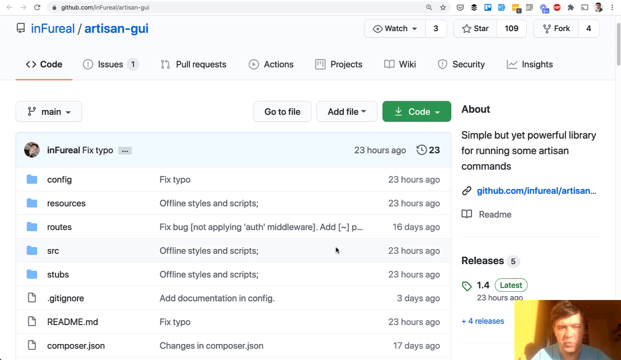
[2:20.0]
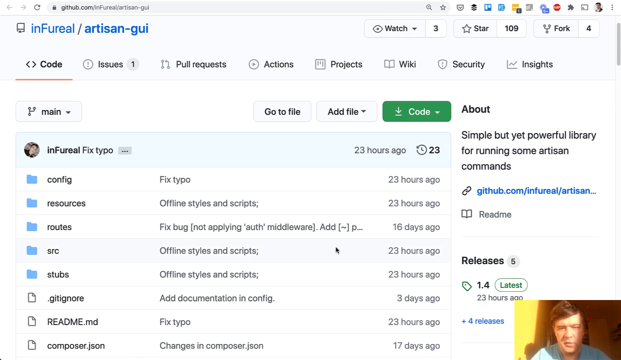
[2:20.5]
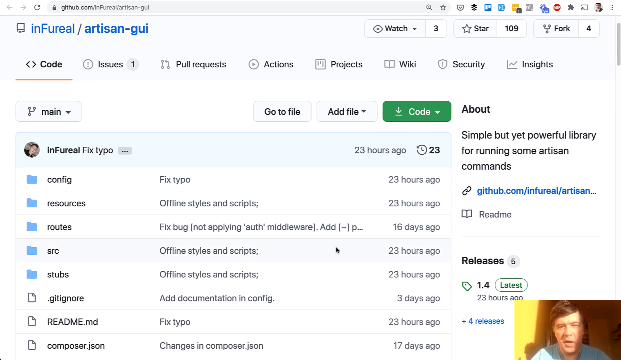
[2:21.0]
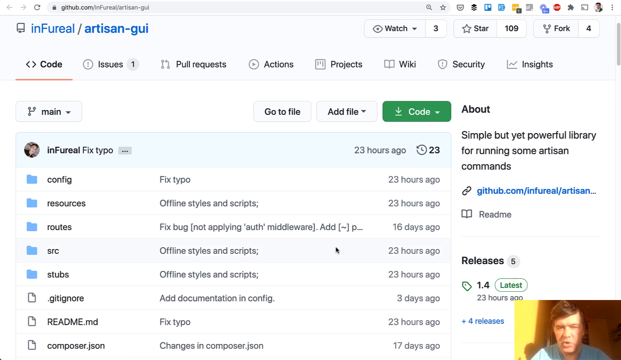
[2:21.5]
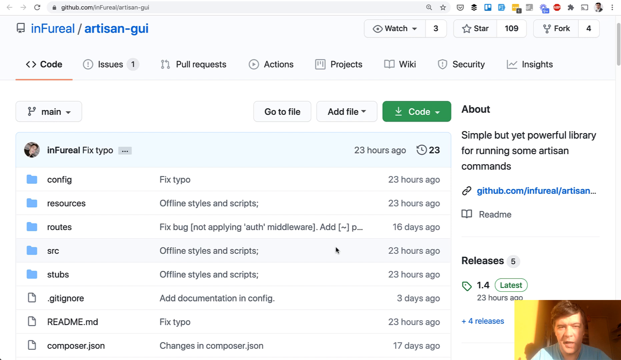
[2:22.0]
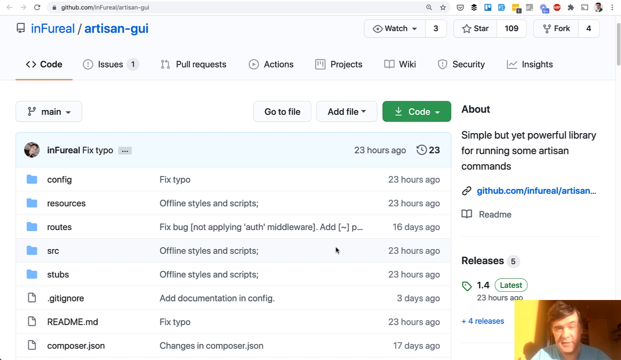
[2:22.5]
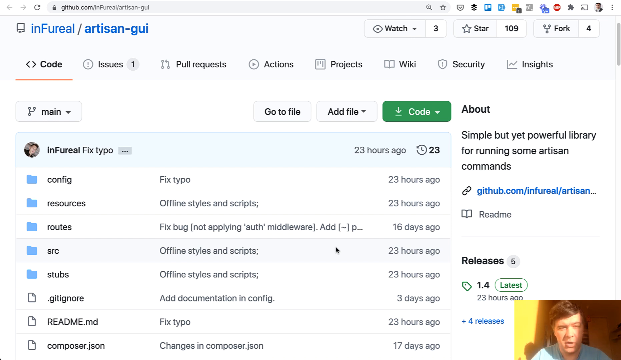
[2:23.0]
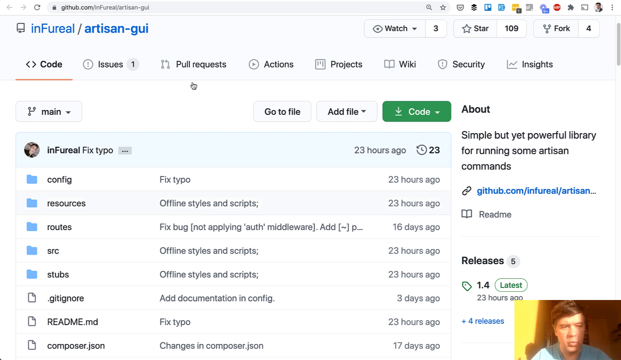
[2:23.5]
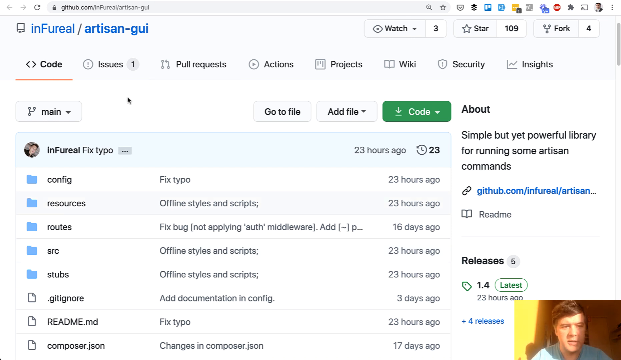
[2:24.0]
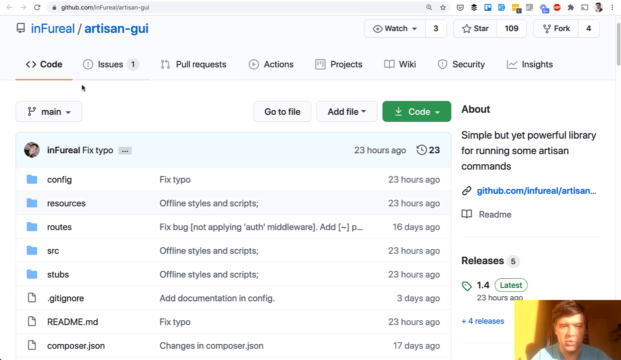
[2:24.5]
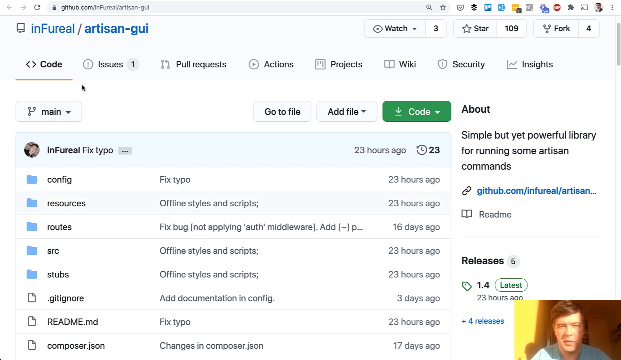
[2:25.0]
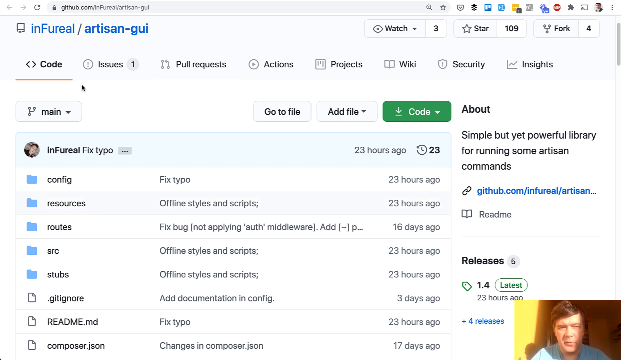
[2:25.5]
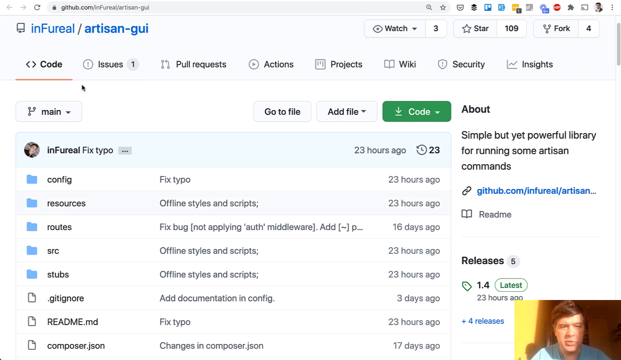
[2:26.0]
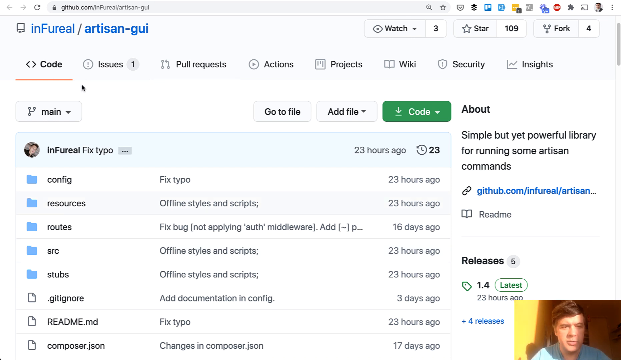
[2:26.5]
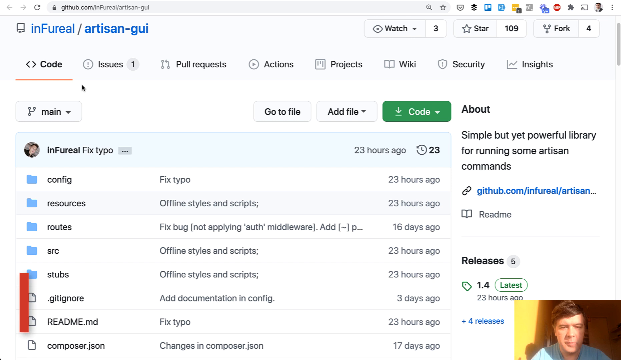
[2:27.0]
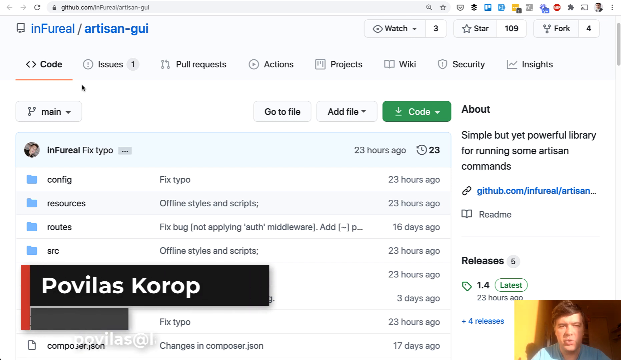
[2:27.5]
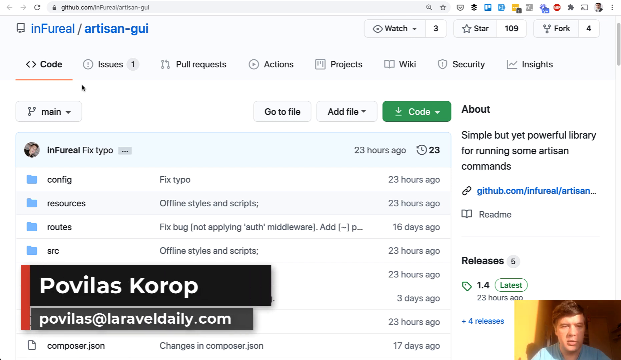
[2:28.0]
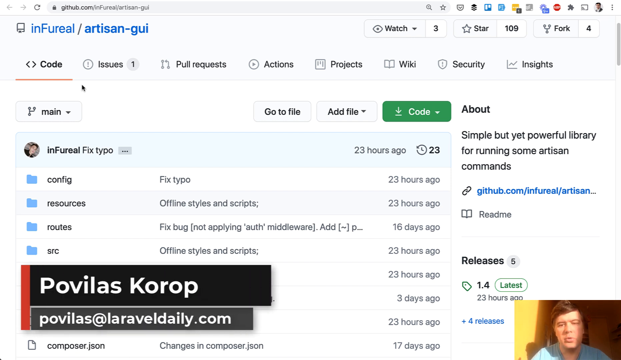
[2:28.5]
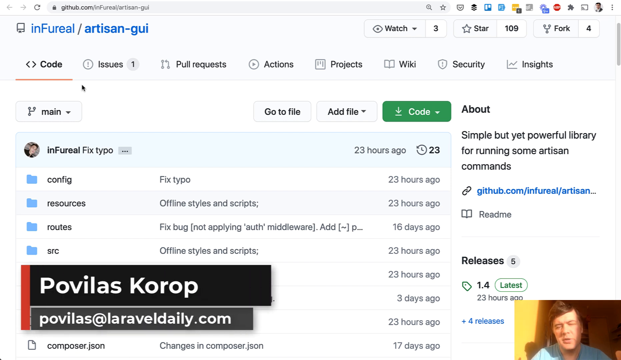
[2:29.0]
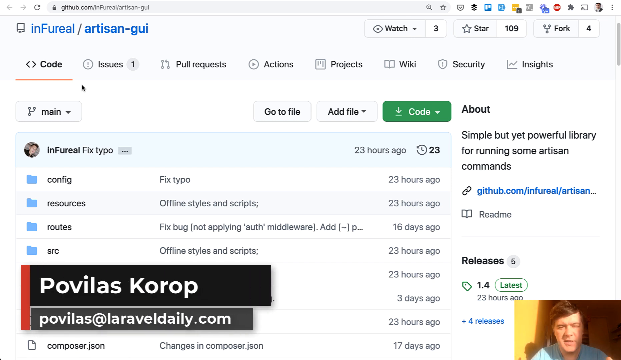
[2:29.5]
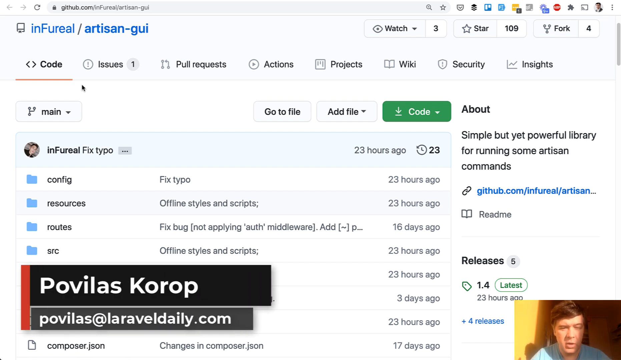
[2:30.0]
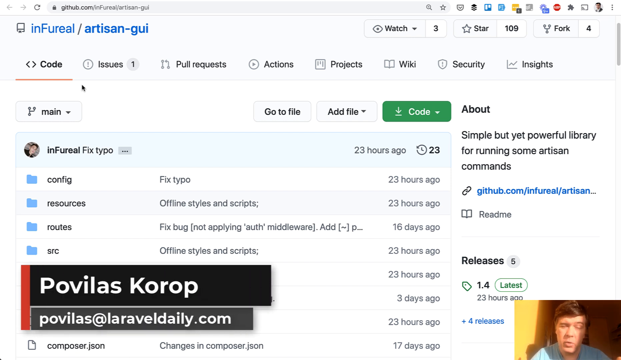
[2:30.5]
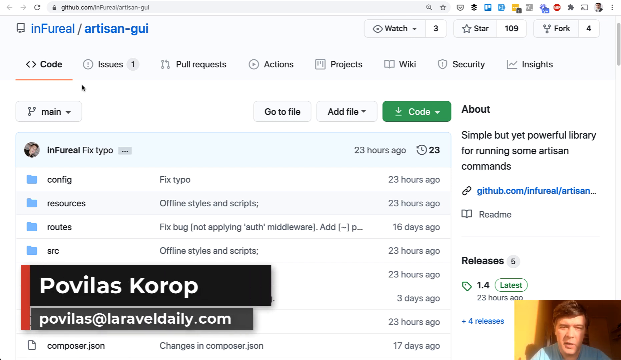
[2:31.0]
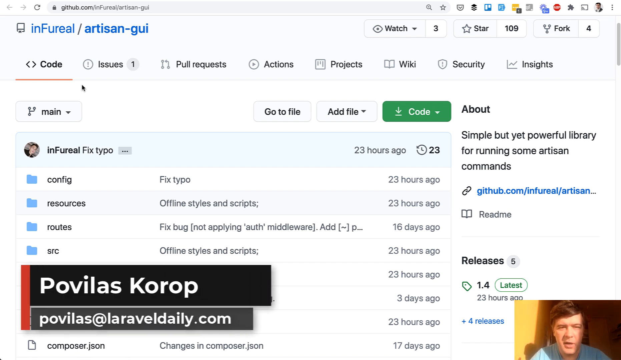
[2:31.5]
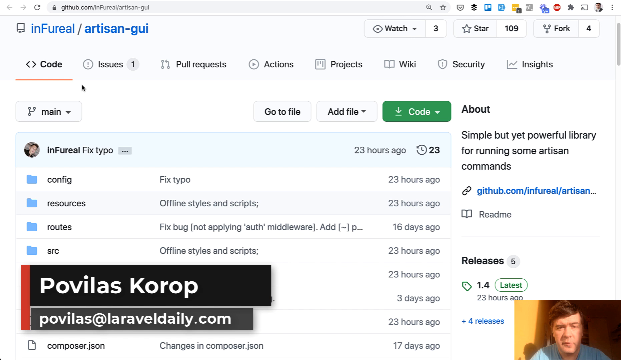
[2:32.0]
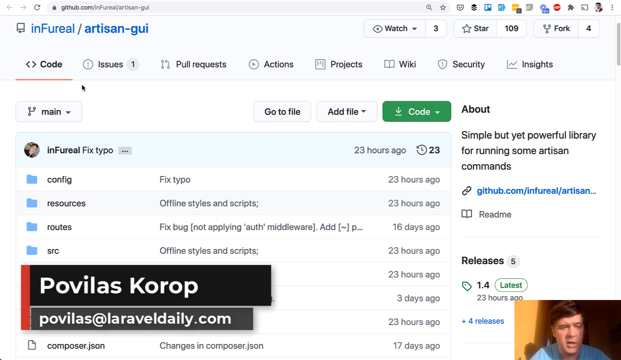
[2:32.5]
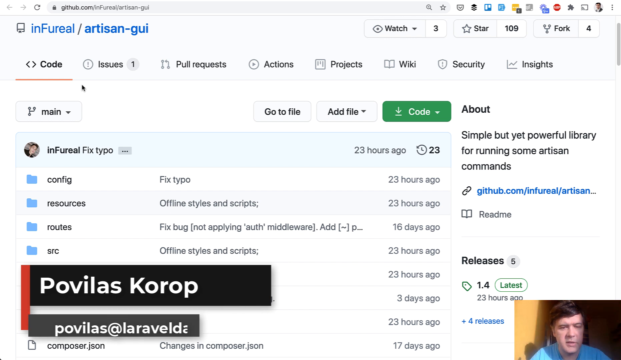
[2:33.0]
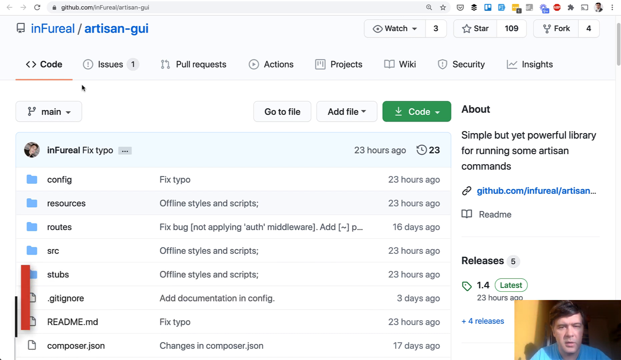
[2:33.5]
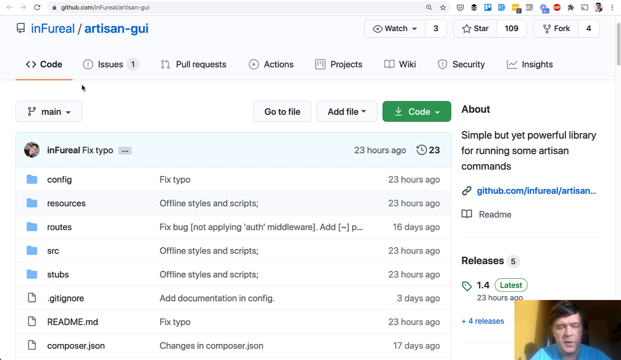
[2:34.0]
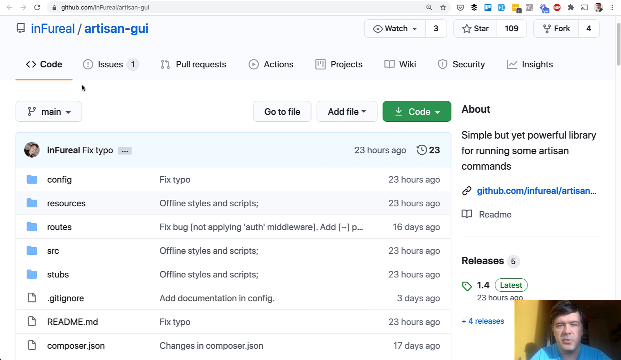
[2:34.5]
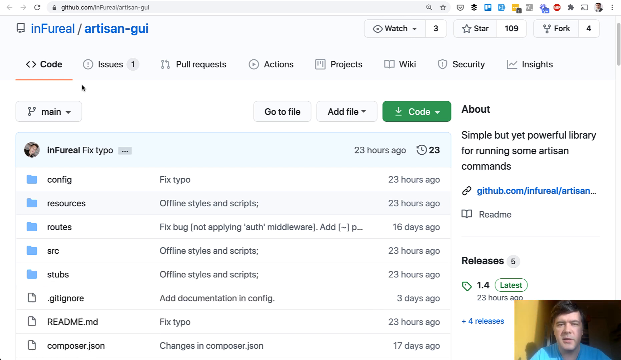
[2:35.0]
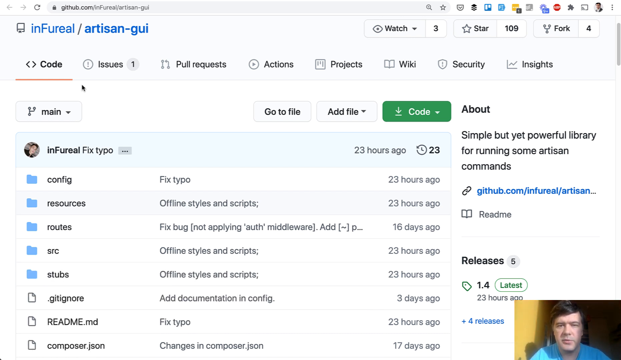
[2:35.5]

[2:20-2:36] The man with brunette hair and a light blue shirt is at the bottom of the screen, talking, with sunlight coming into his room that makes the video kind of blurry. He looks at an artisan page showing items such as "code," "issues," "pull requests," "actions," "projects," "config," "resources" and "routes." No company name is visible.